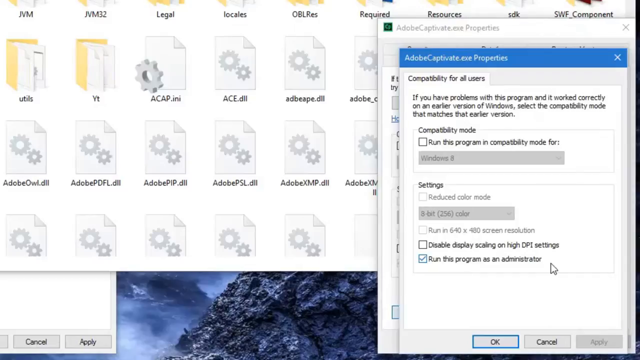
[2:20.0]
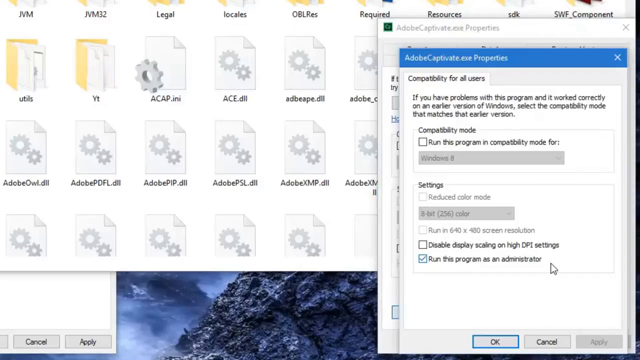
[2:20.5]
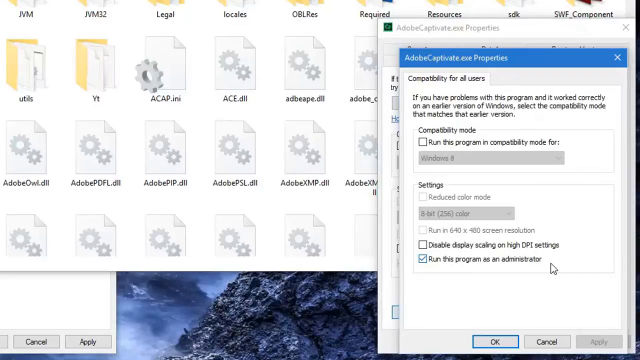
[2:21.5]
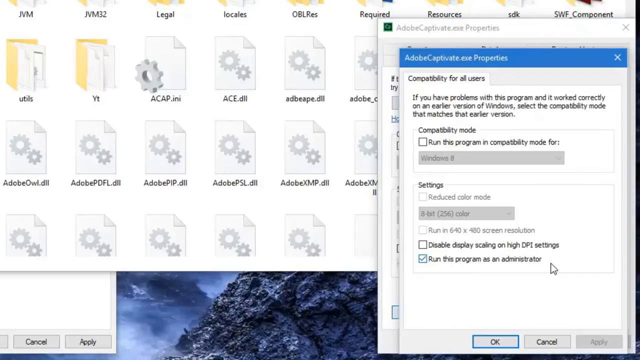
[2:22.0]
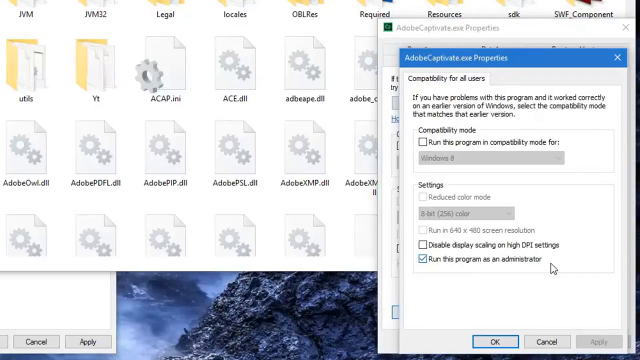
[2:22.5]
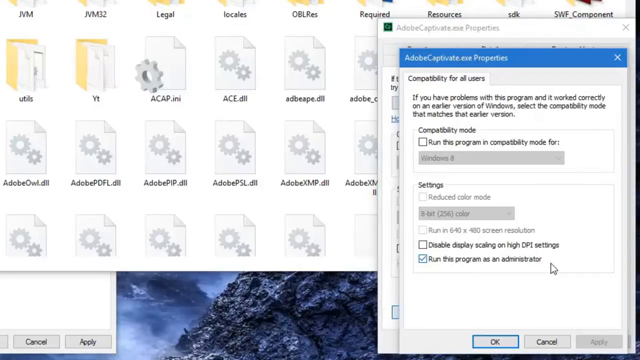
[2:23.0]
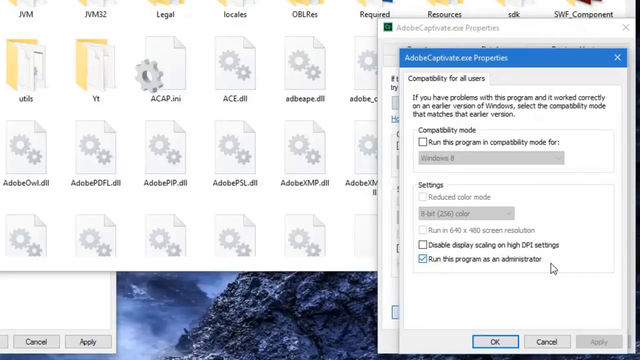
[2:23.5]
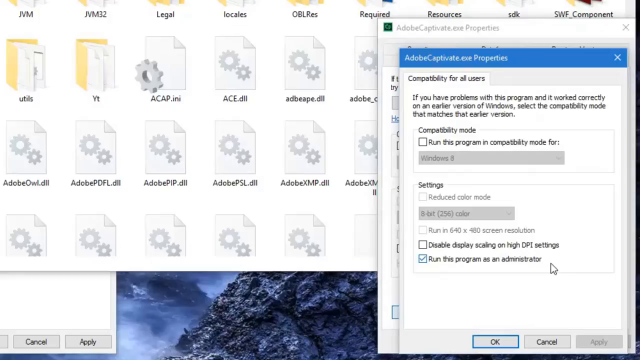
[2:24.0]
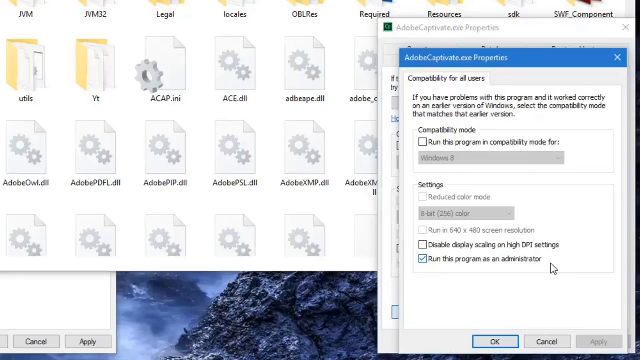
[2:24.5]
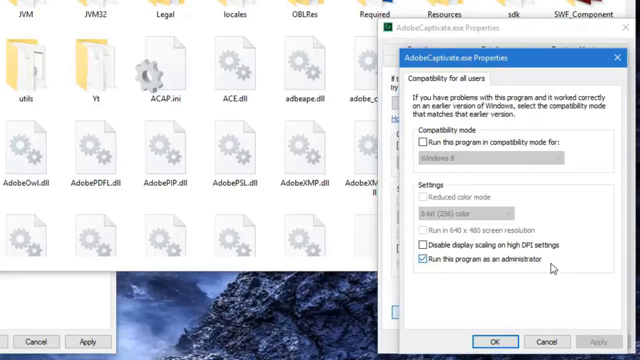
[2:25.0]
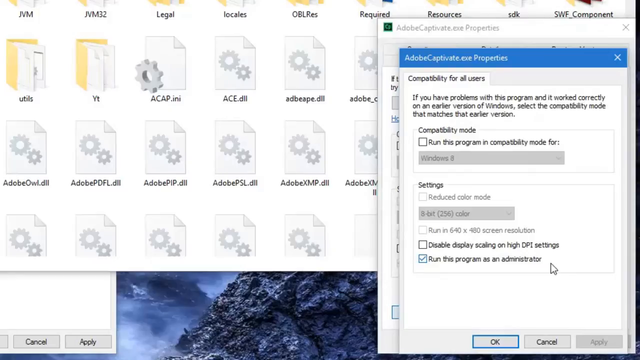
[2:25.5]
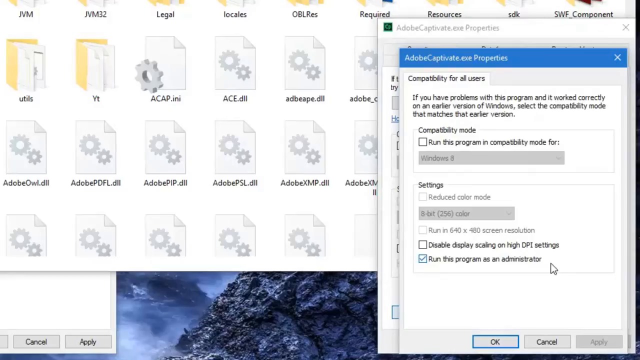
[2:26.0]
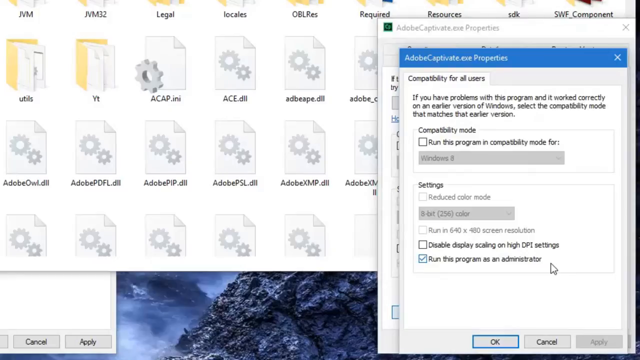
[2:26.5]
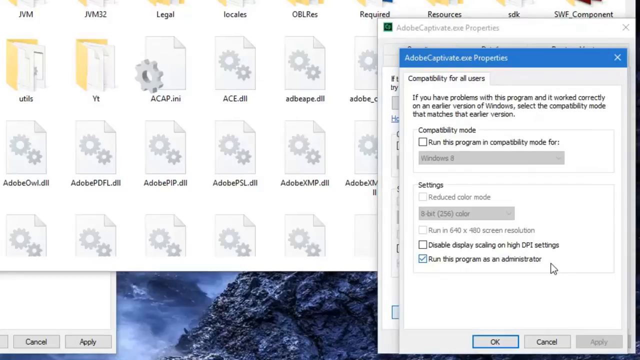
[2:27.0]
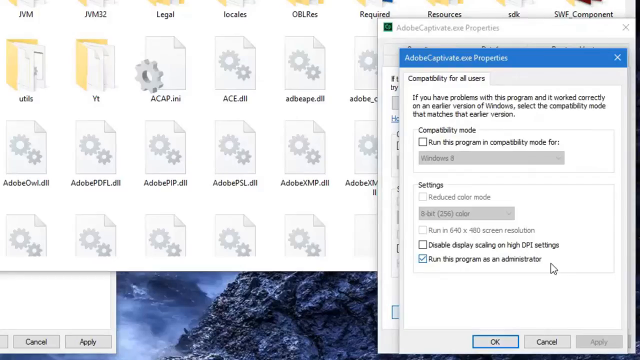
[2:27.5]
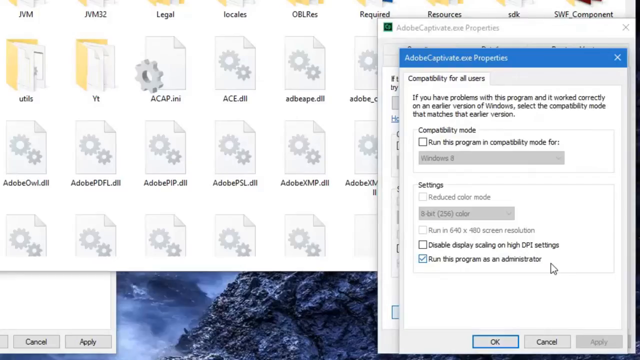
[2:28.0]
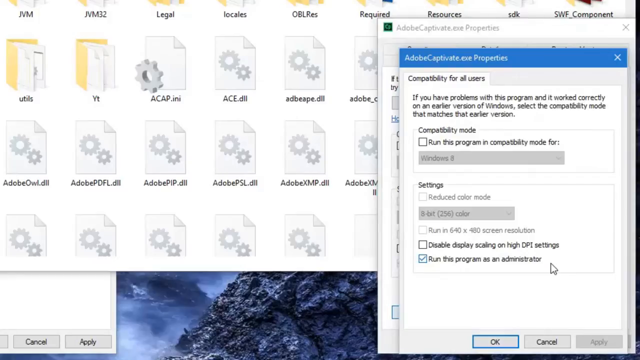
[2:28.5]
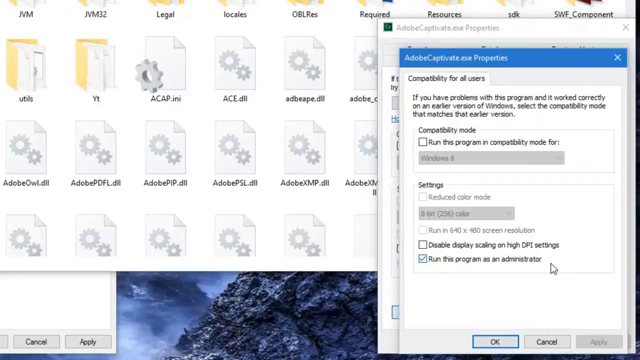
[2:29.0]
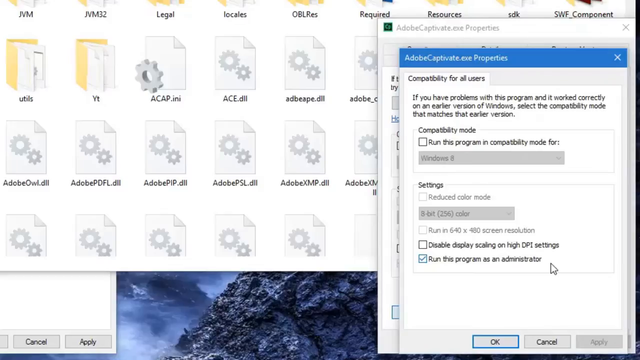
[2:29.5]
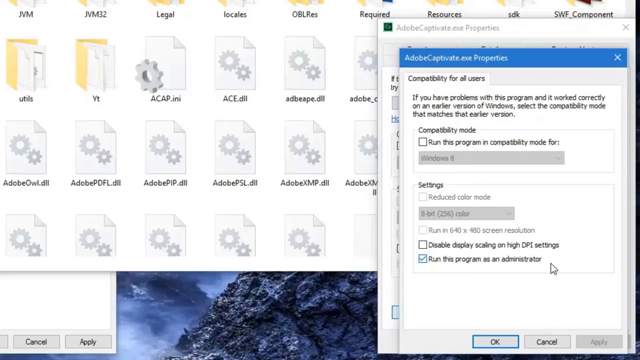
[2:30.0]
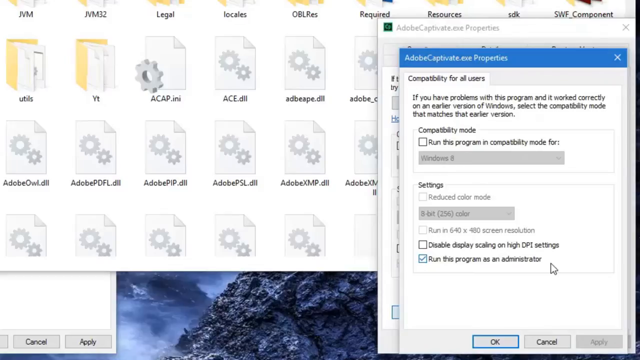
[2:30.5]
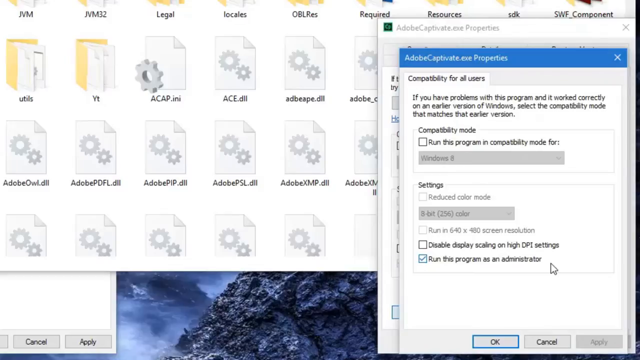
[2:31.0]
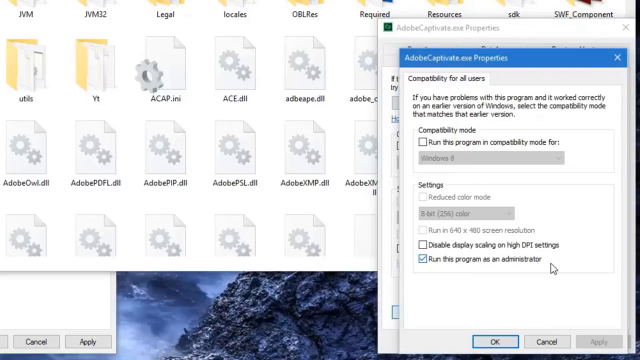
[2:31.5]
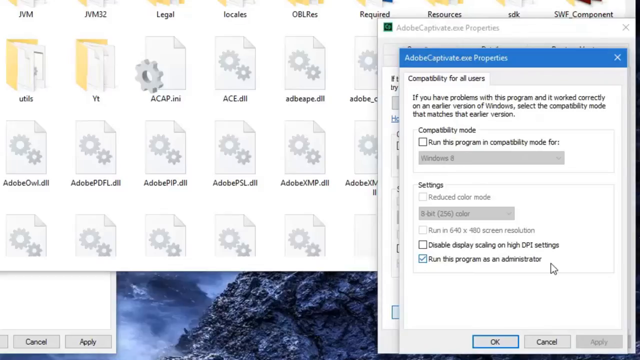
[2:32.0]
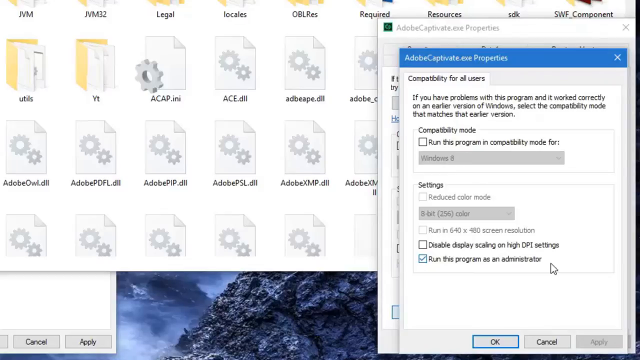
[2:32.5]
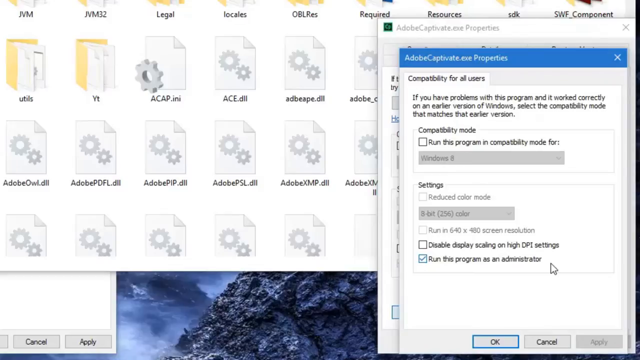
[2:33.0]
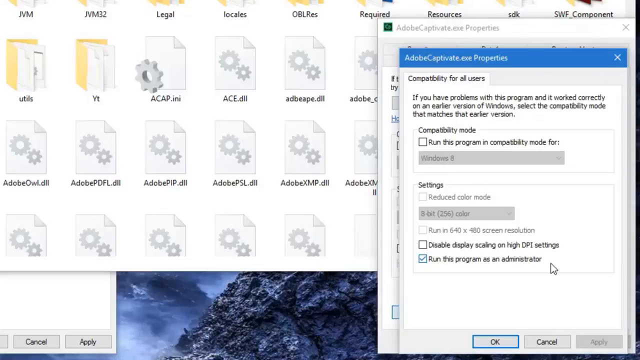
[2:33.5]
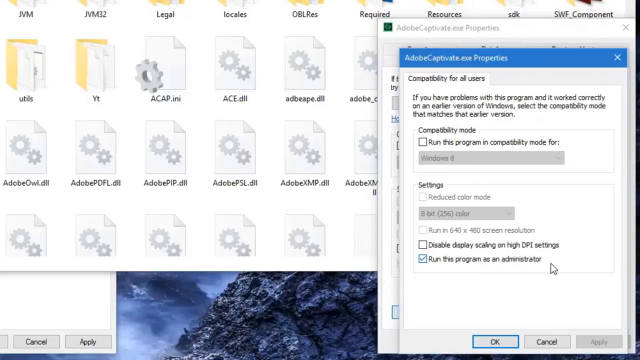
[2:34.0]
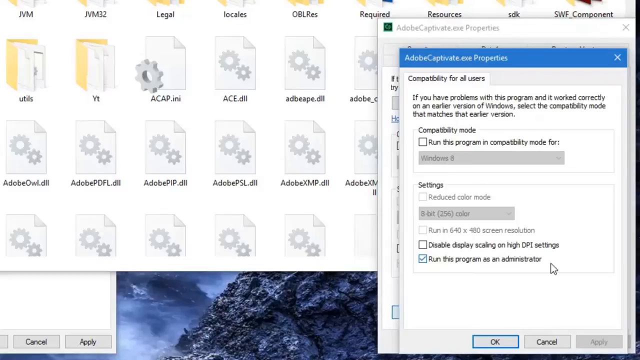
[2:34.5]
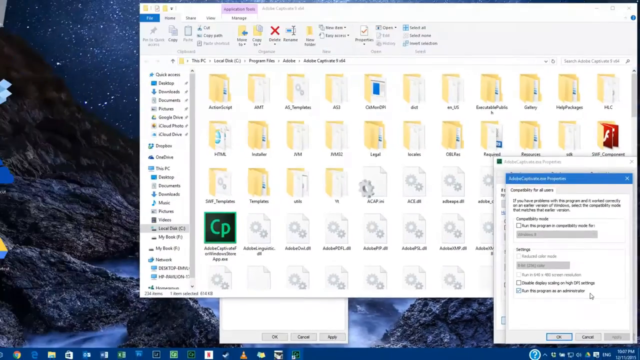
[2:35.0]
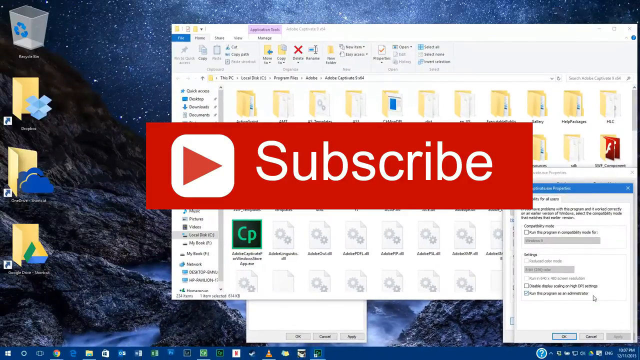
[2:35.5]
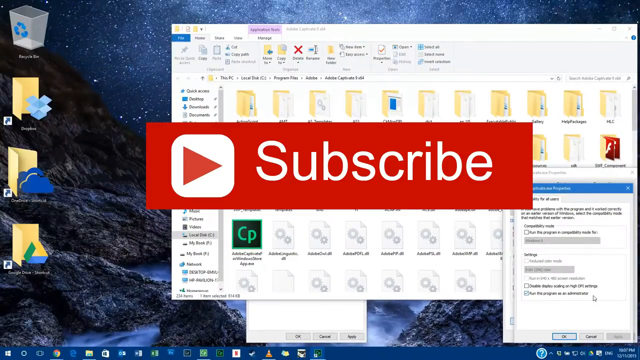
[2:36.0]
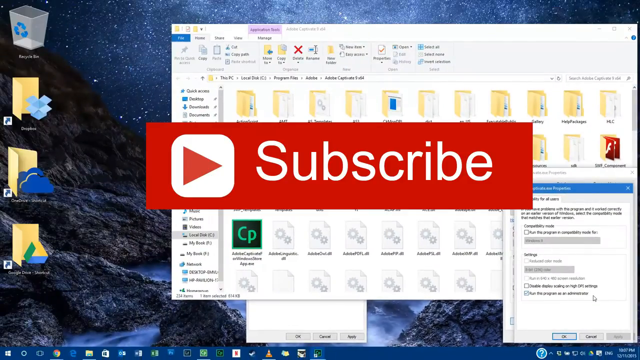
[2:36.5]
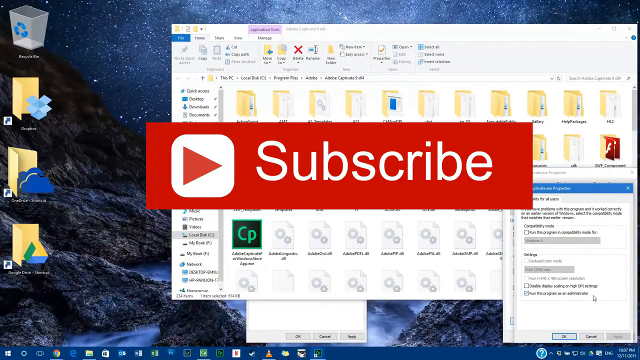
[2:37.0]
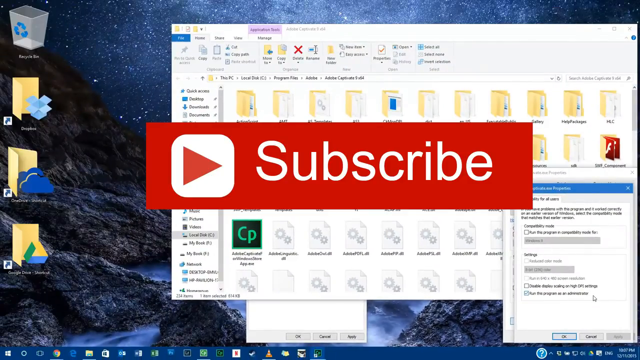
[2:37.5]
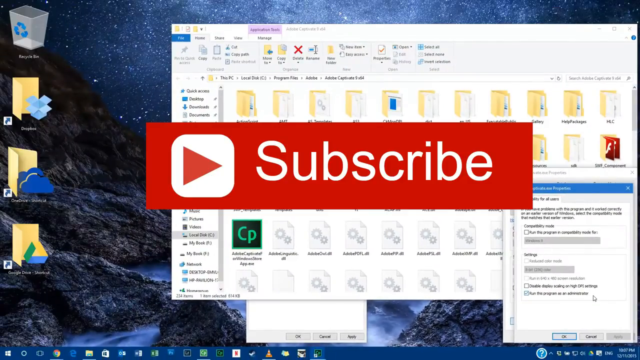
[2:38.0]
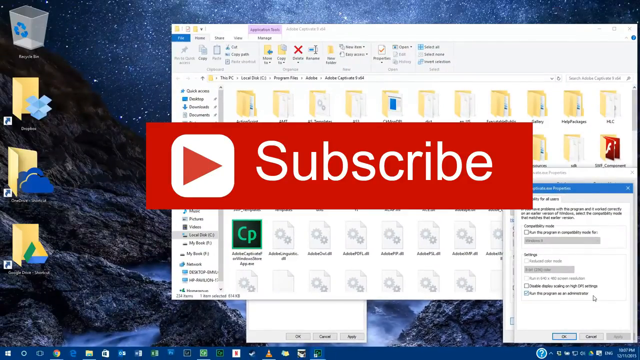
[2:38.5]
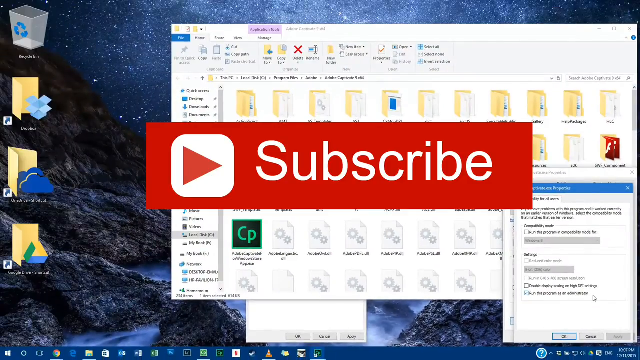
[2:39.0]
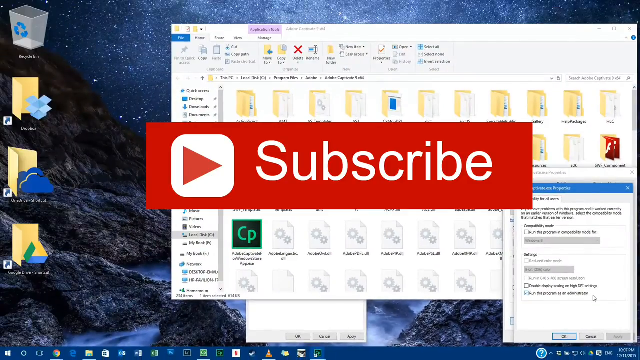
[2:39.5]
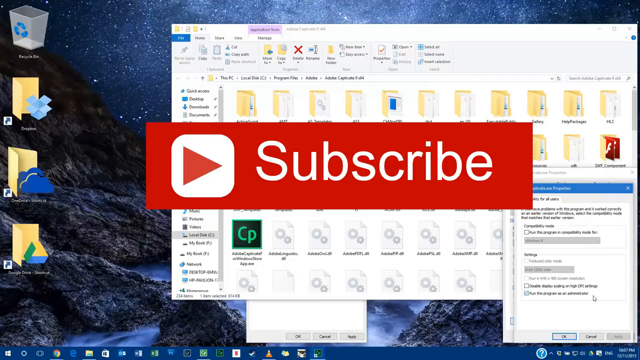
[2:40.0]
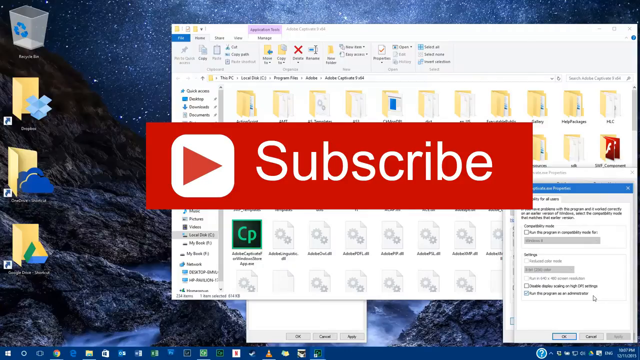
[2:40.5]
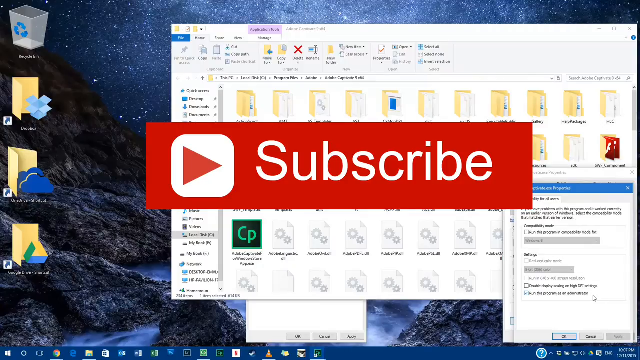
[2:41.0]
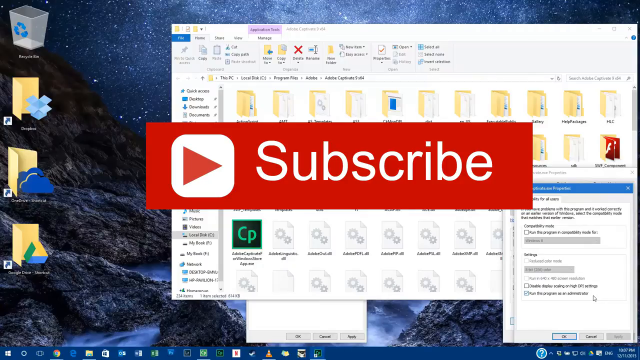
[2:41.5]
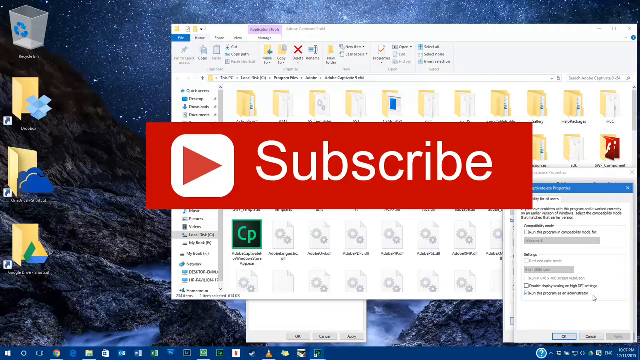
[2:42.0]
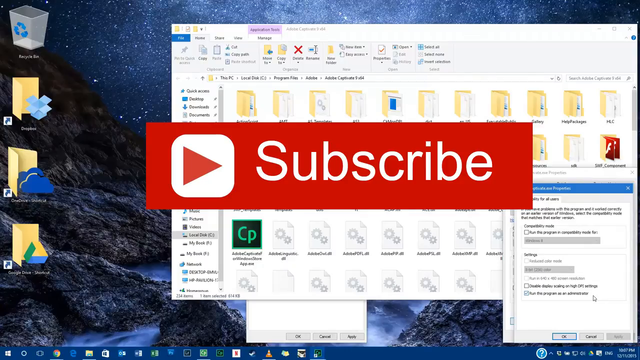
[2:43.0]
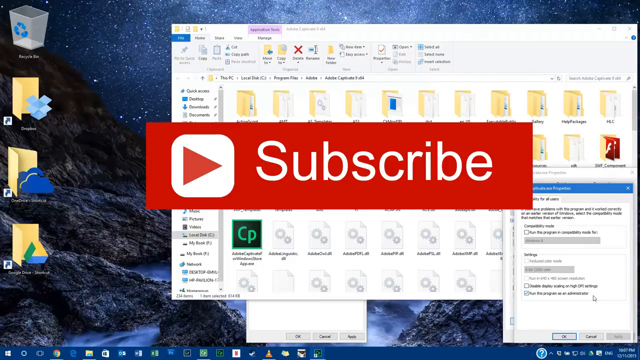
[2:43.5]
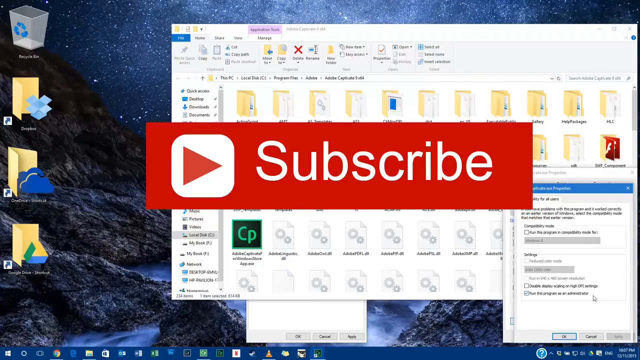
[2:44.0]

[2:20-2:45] Various options for Adobe properties appear, including Adobe file properties on an audio selection with items to click on. Then a screen shows the text "subscribe" with a YouTube logo right next to it.